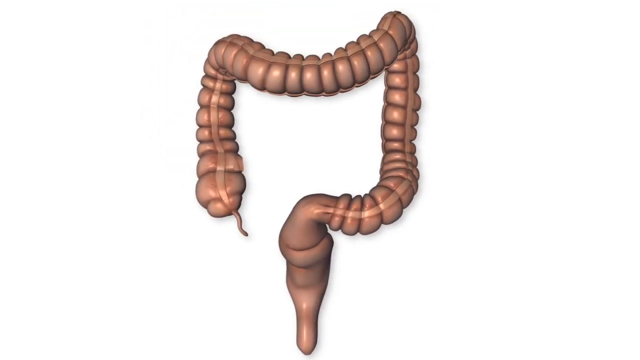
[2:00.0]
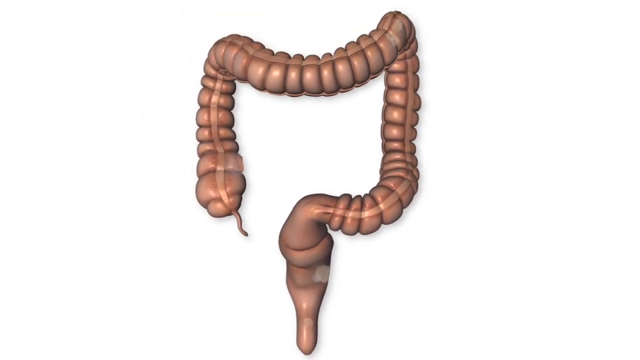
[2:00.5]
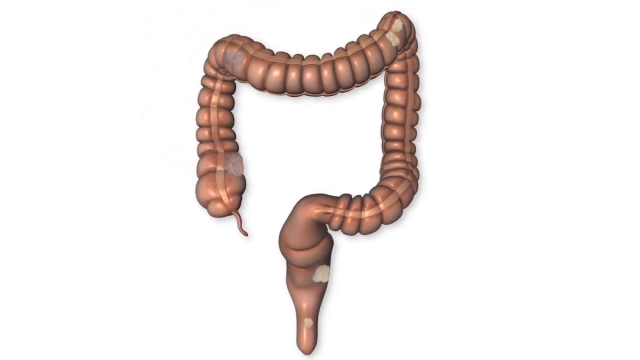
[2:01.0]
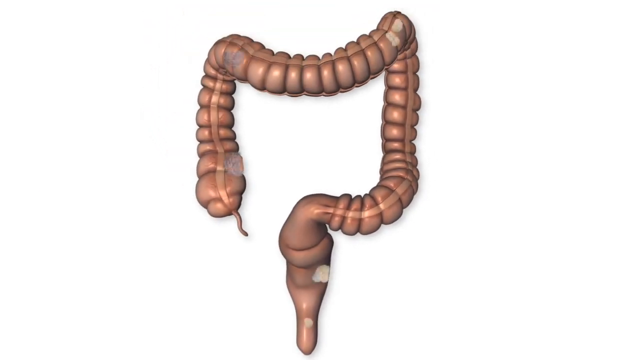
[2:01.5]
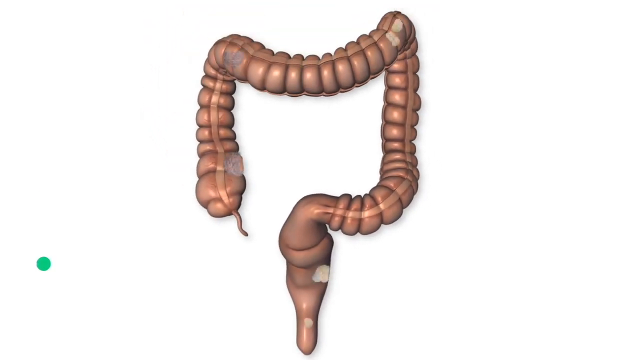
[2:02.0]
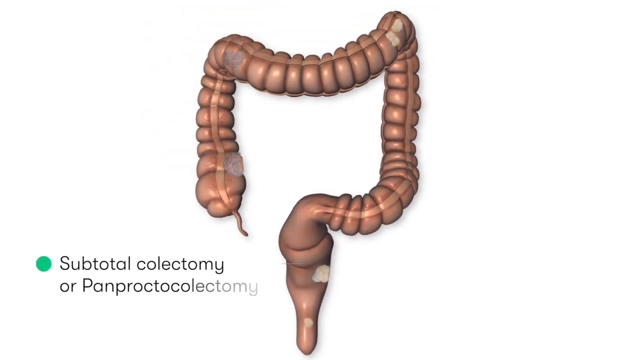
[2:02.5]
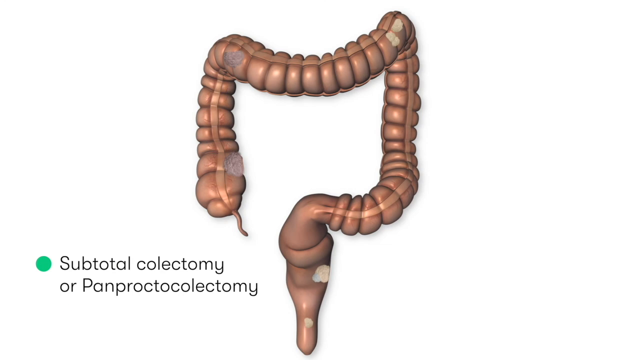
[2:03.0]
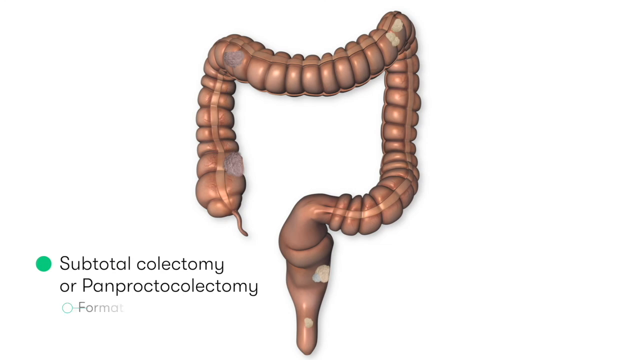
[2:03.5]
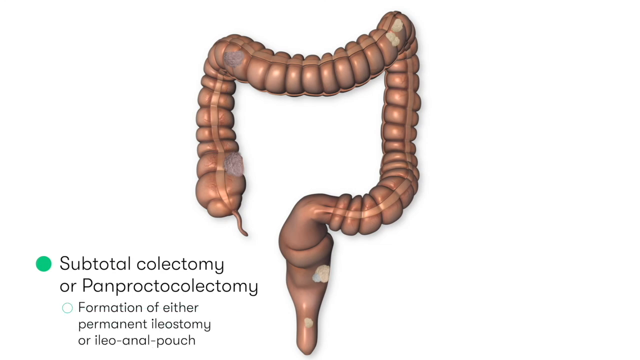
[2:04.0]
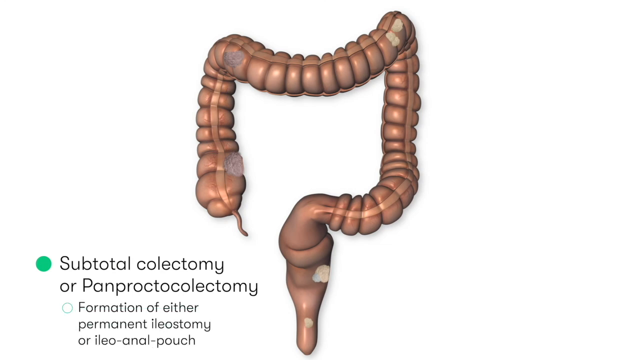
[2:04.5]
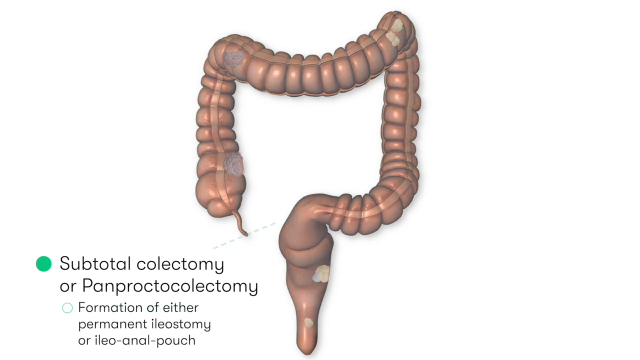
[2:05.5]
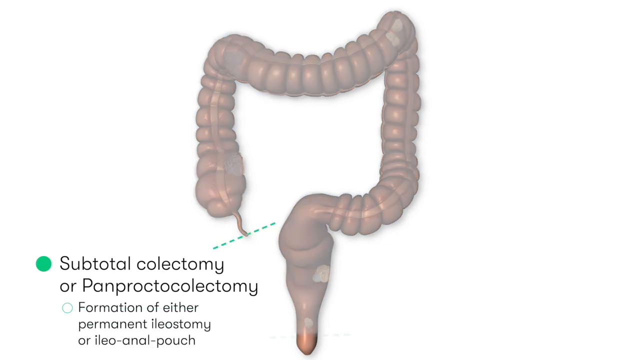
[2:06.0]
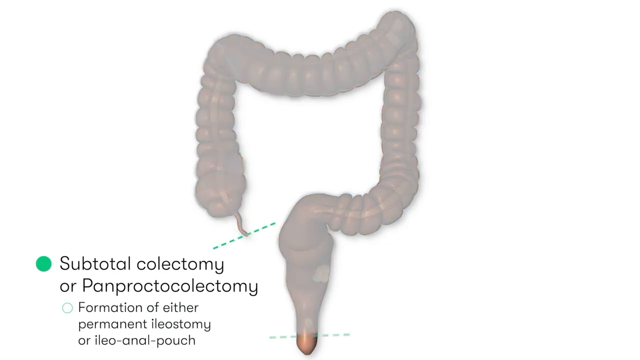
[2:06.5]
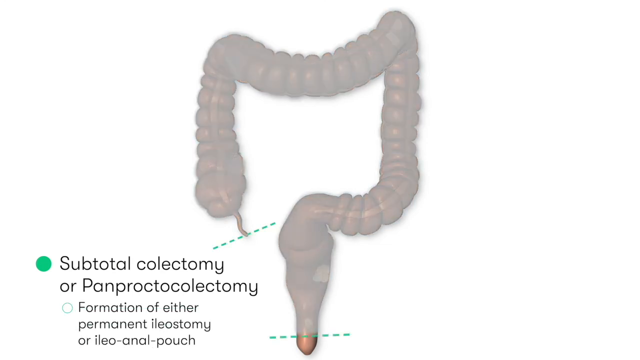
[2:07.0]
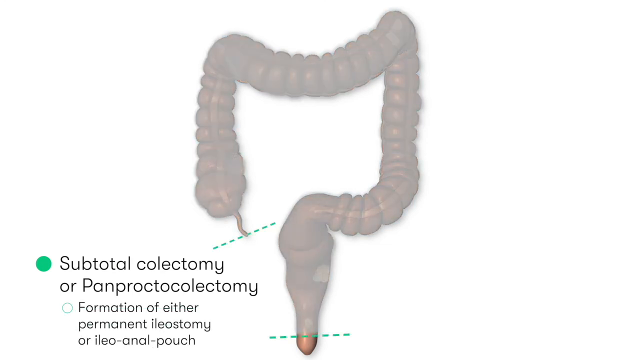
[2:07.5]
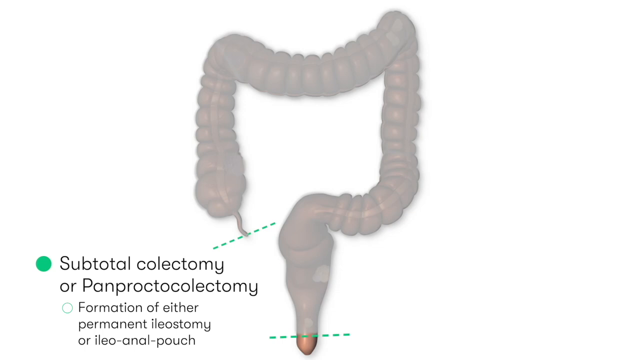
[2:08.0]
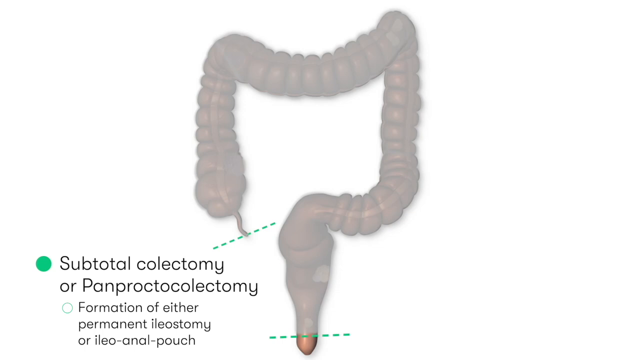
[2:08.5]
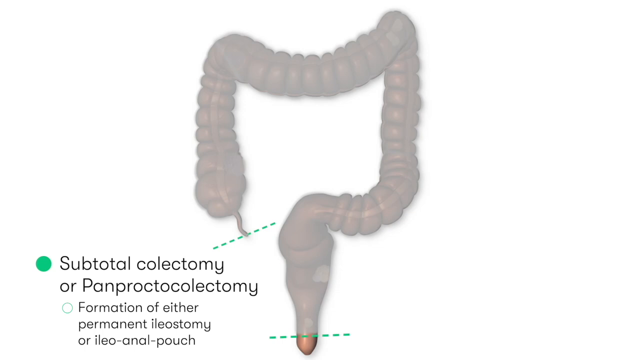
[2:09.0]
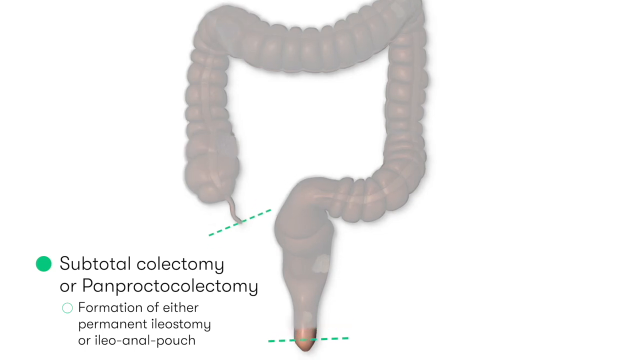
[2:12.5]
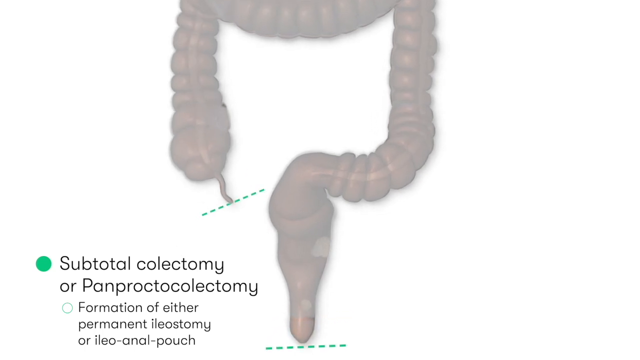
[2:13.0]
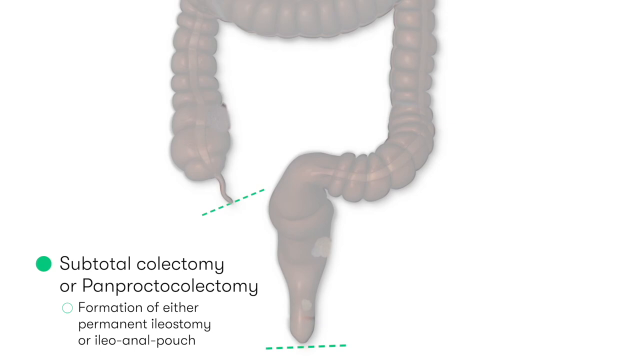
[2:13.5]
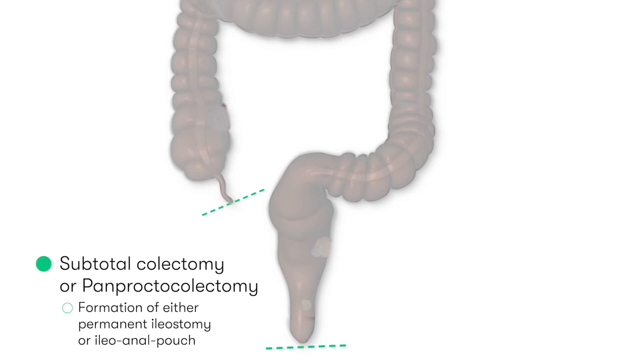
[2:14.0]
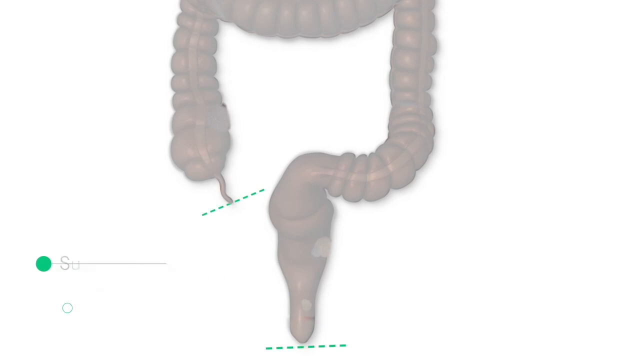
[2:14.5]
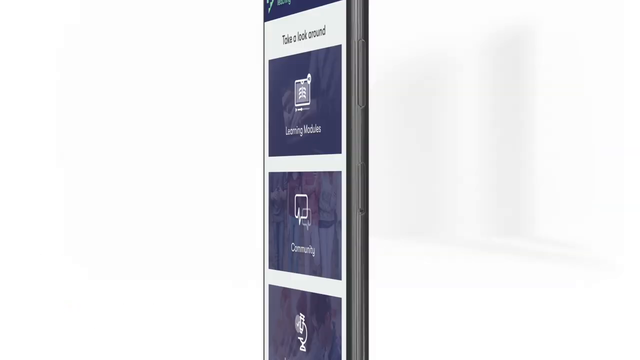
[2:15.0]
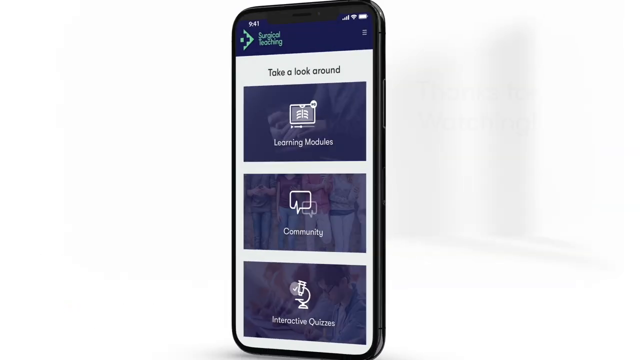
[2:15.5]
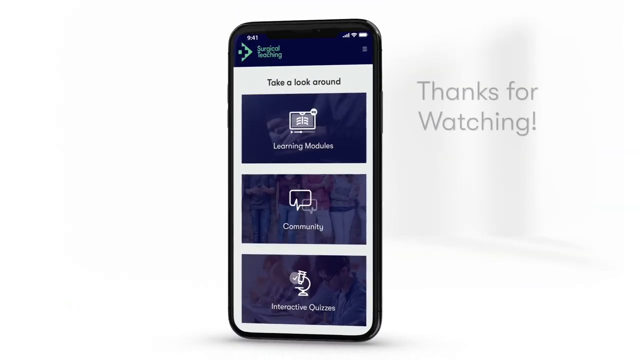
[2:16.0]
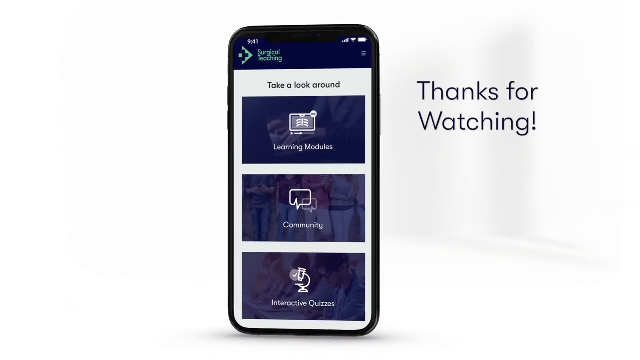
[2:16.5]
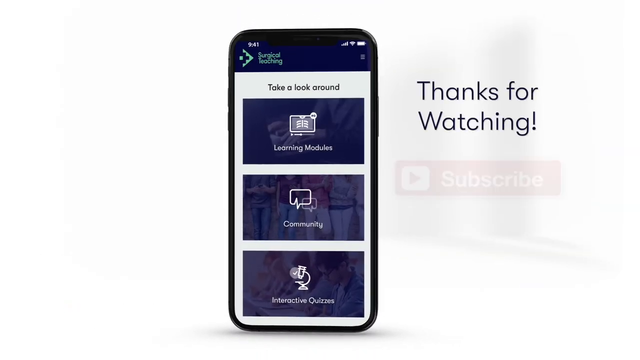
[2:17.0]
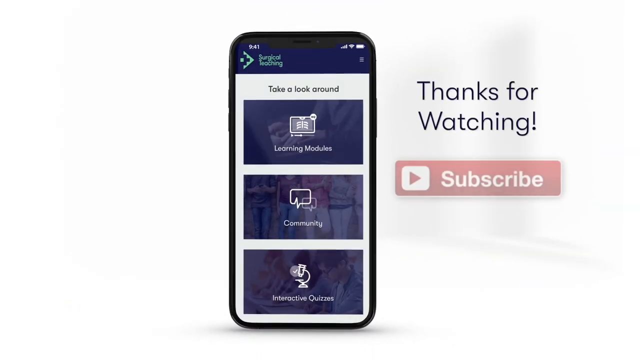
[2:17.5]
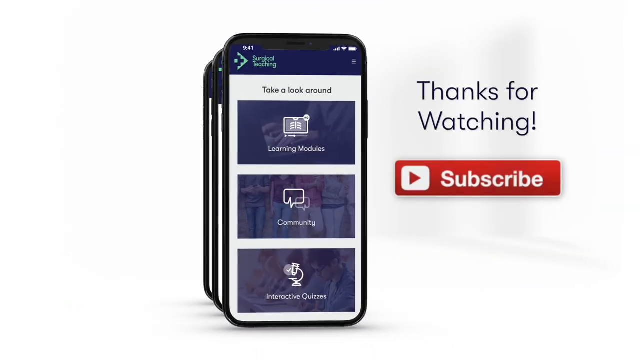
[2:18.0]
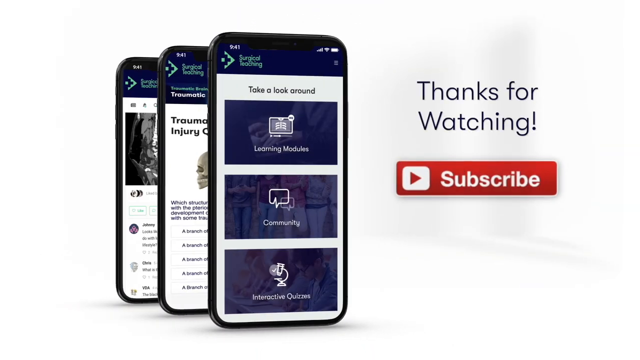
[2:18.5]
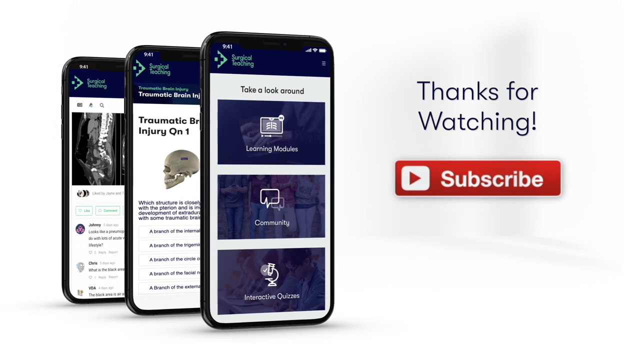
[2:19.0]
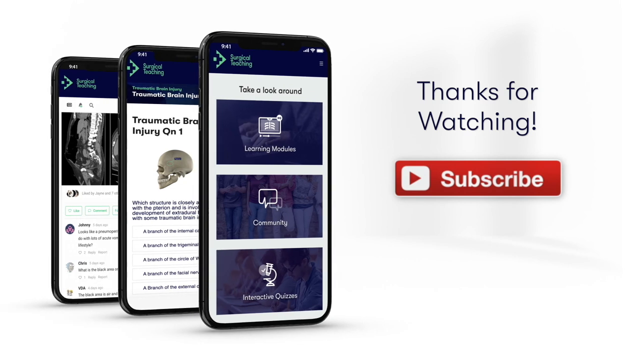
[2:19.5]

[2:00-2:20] A white background holds the realistic-looking 3D model of what appears to be a colon, kind of beige in color. On the left side of the screen a green bullet point appears, with text reading "formation of either permanent ileostomy or ileoanal pouch." Green dotted lines appear in different sections of the 3D model, apparently marking where some of the procedures happen. The next screen is all white, with a smartphone in the middle displaying the company logo, Surgical Teaching, which looks like an arrow. On the right side of the screen, text reads "thanks for watching," with a subscribe button below it. The phone then transitions into three different cell phones on the left side of the screen.